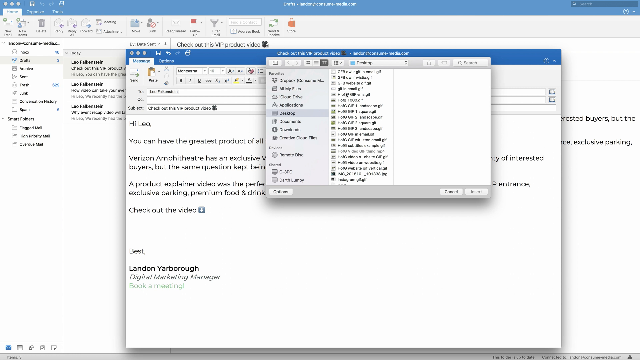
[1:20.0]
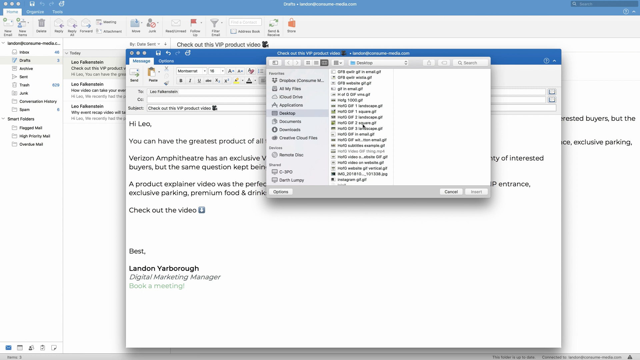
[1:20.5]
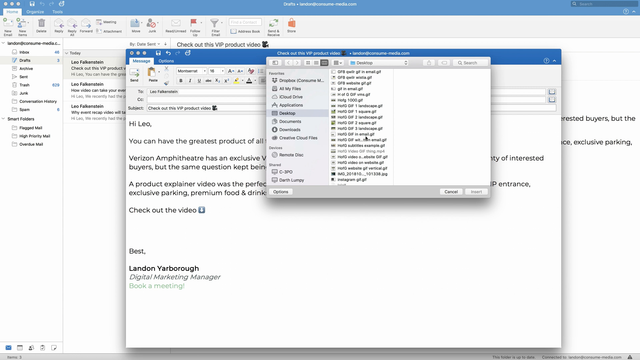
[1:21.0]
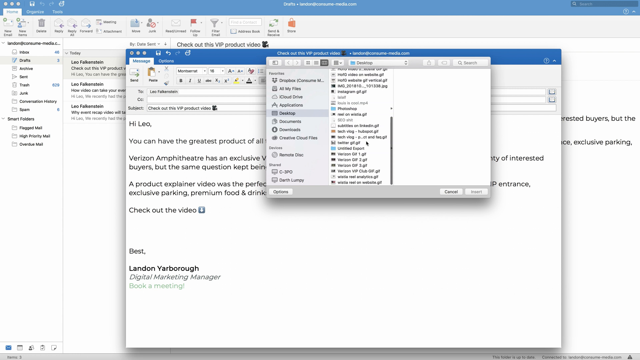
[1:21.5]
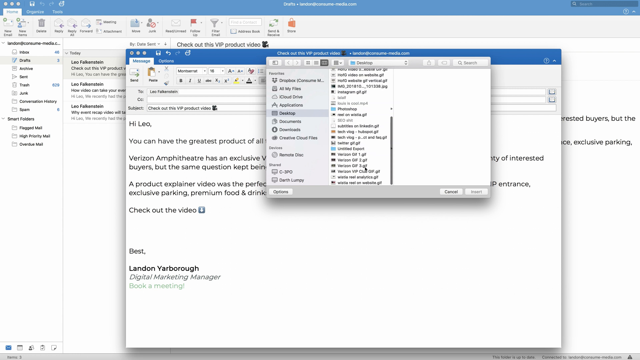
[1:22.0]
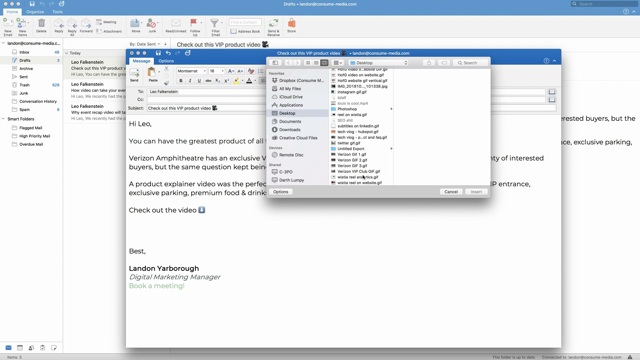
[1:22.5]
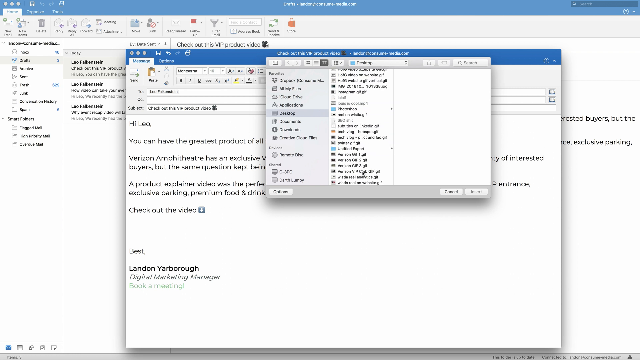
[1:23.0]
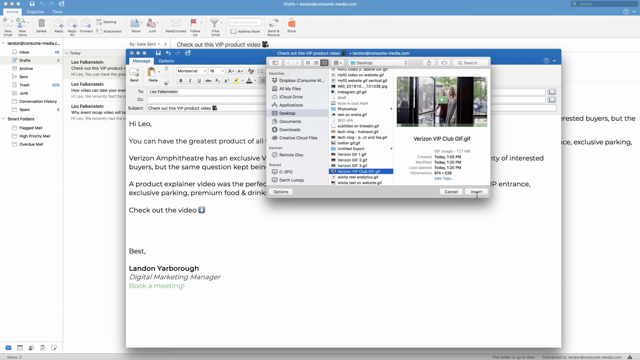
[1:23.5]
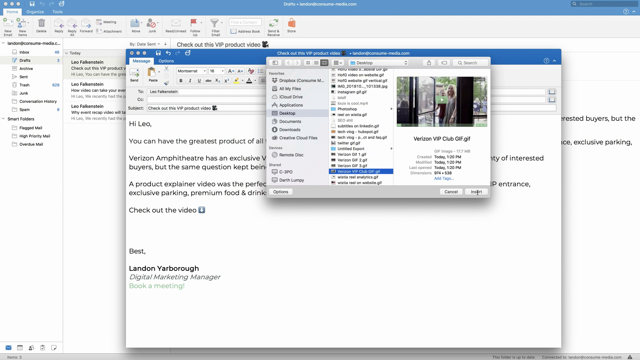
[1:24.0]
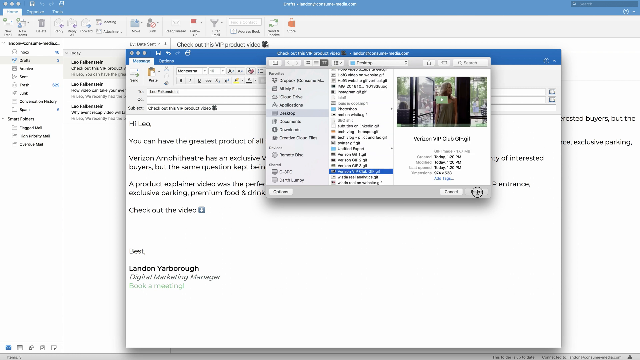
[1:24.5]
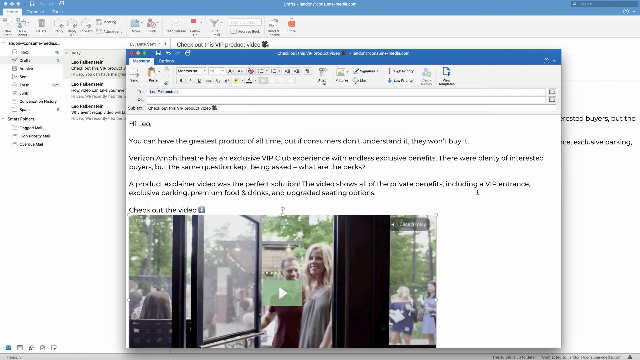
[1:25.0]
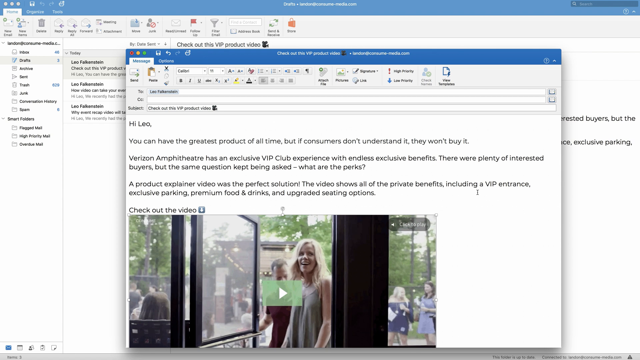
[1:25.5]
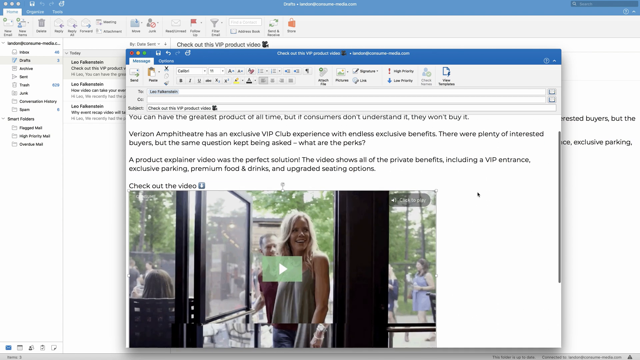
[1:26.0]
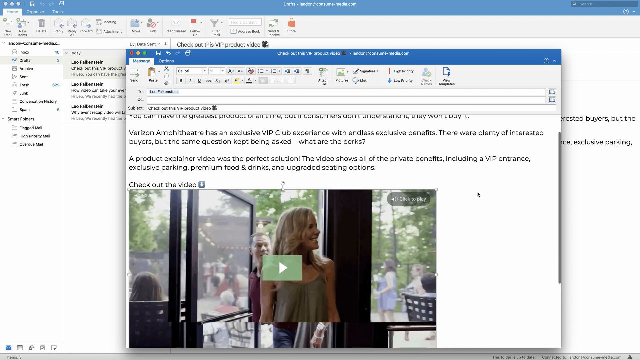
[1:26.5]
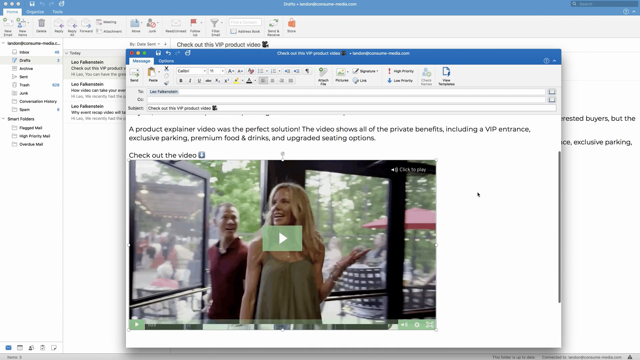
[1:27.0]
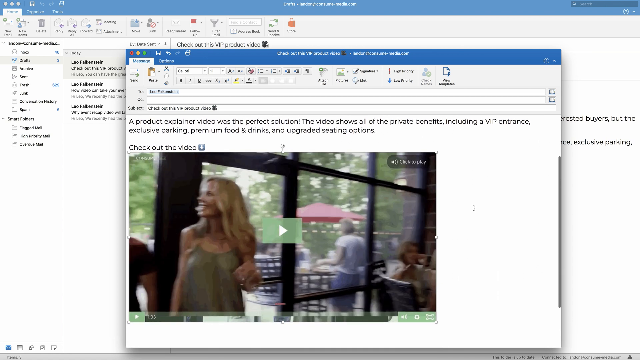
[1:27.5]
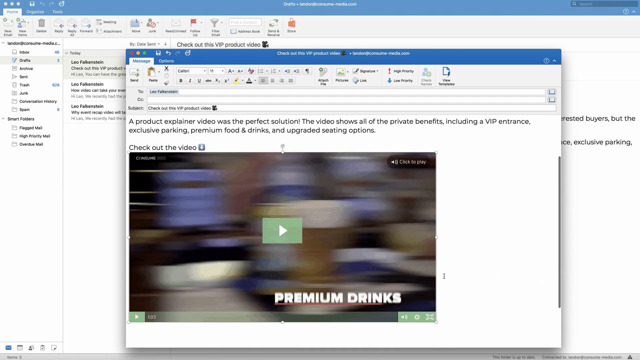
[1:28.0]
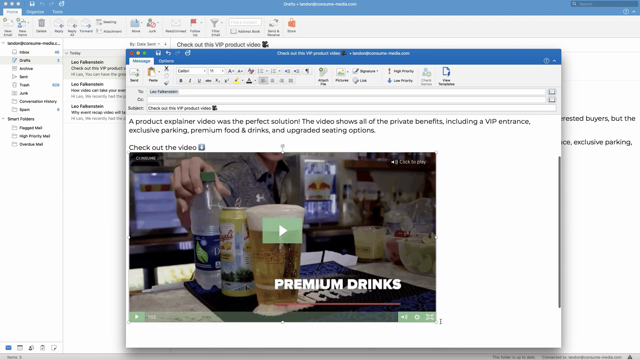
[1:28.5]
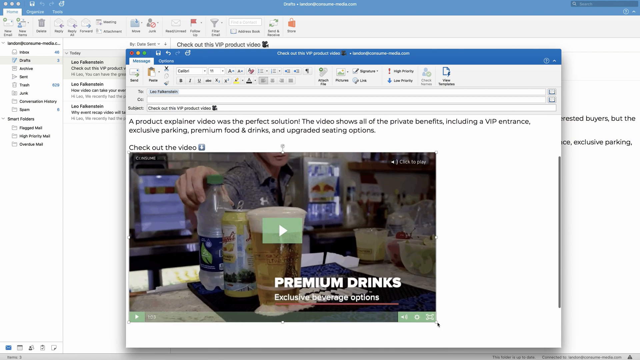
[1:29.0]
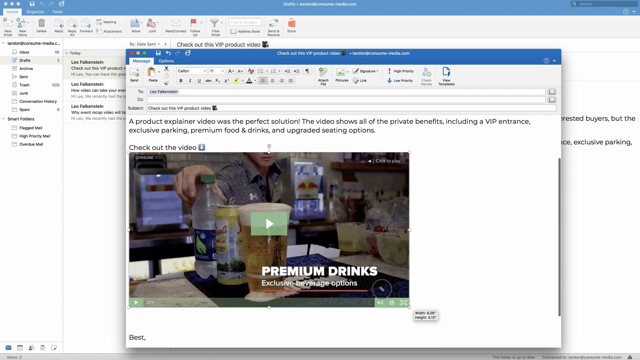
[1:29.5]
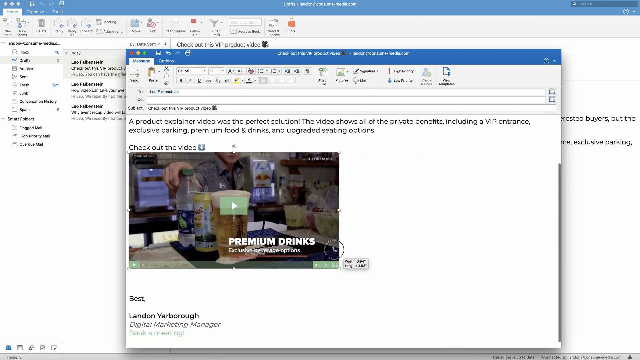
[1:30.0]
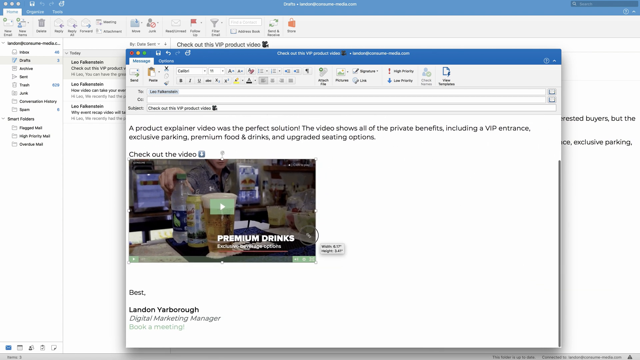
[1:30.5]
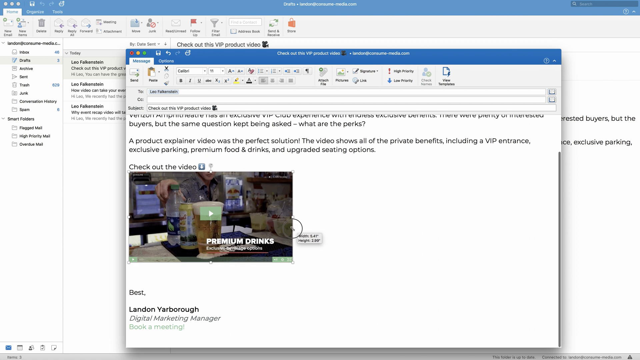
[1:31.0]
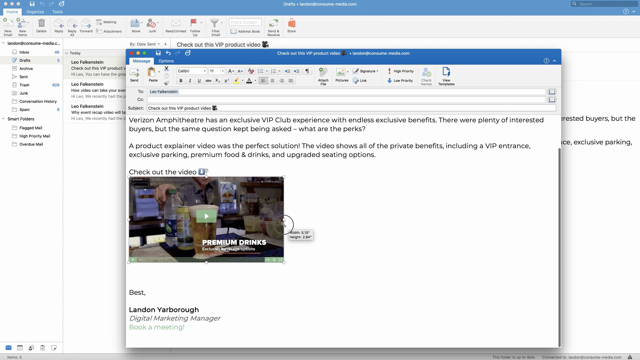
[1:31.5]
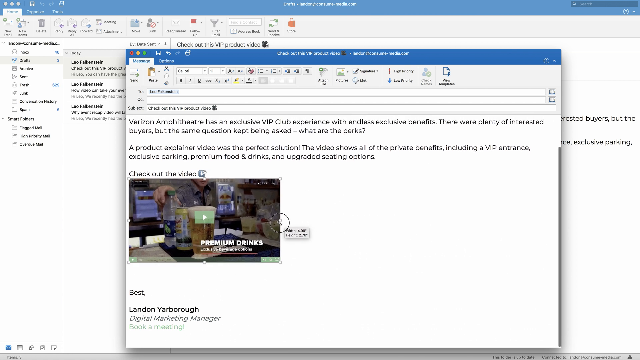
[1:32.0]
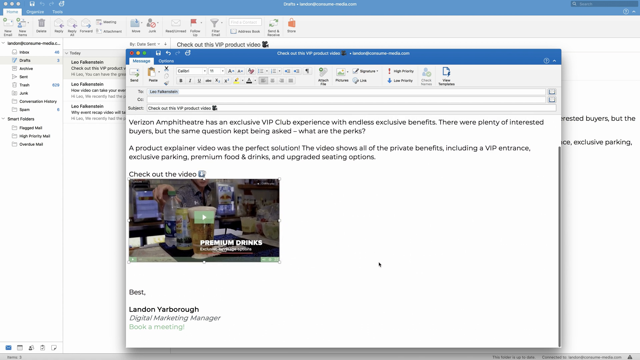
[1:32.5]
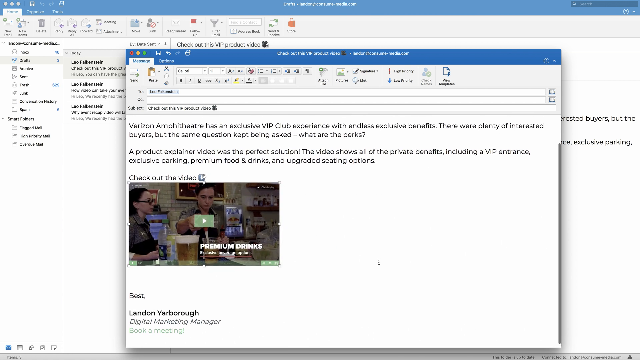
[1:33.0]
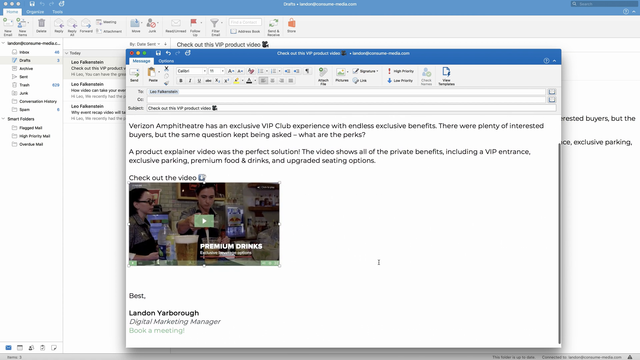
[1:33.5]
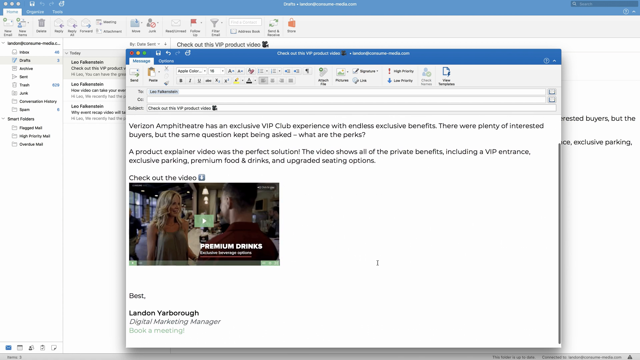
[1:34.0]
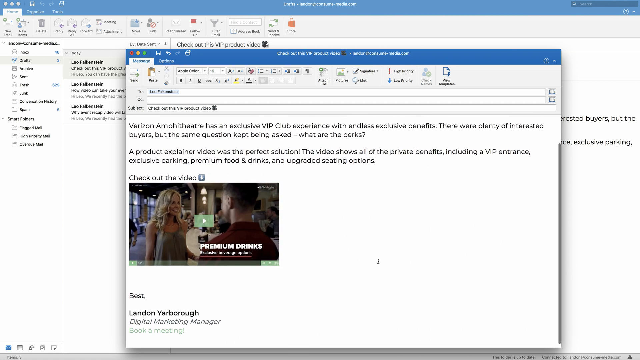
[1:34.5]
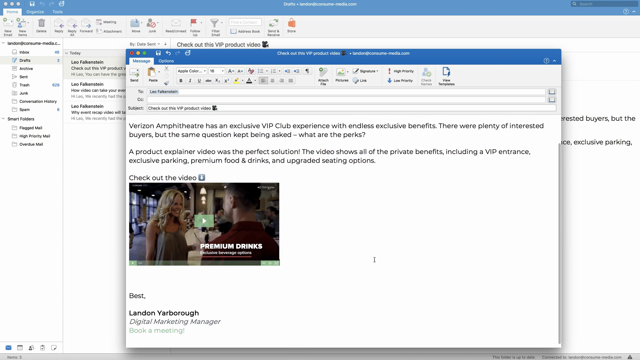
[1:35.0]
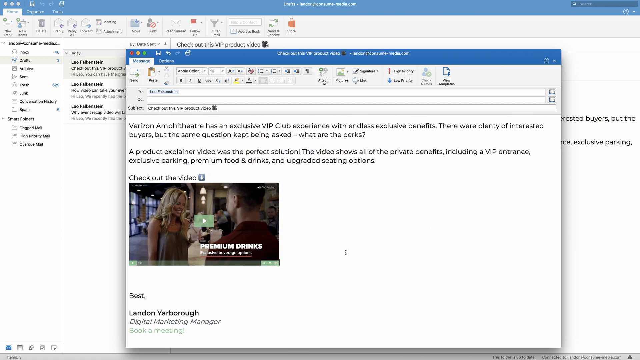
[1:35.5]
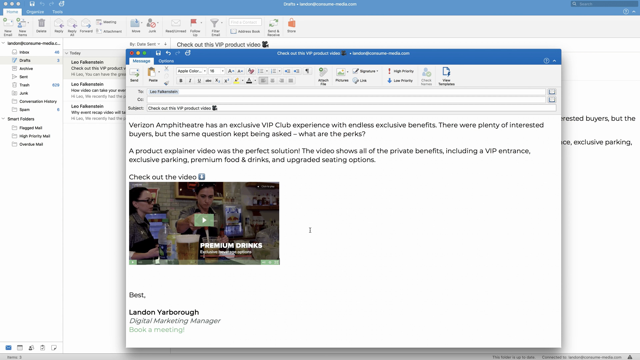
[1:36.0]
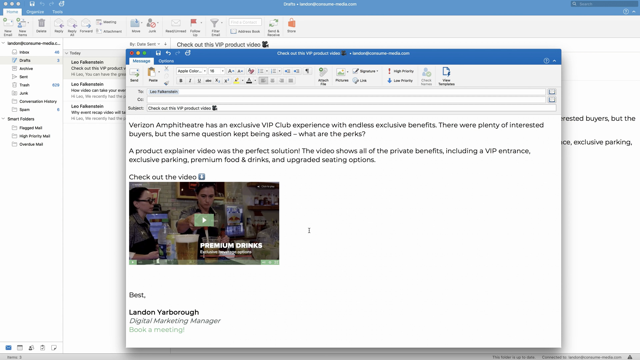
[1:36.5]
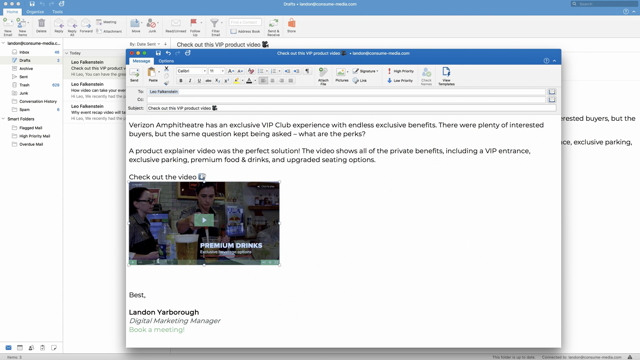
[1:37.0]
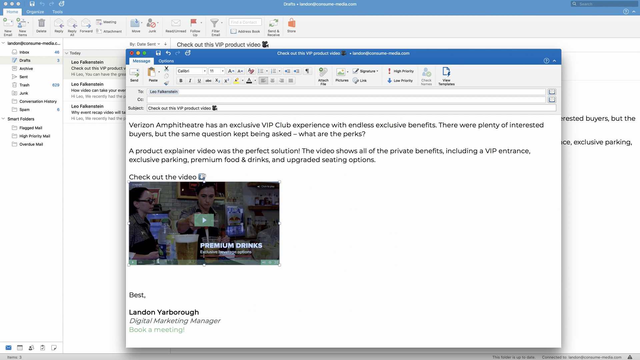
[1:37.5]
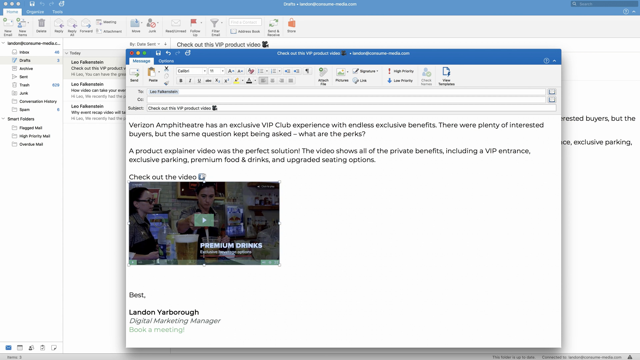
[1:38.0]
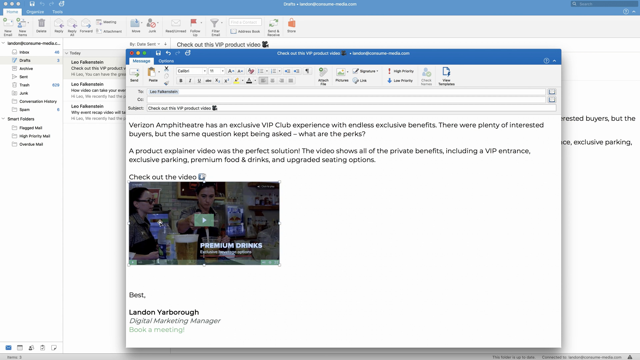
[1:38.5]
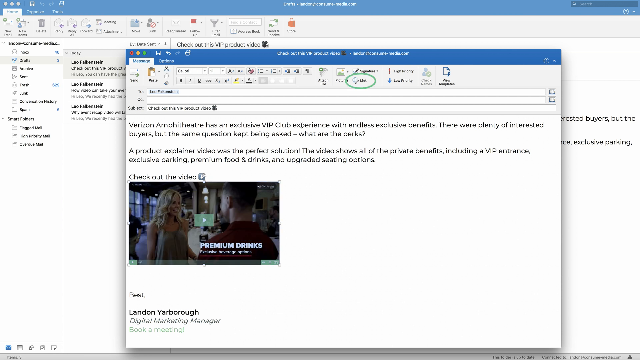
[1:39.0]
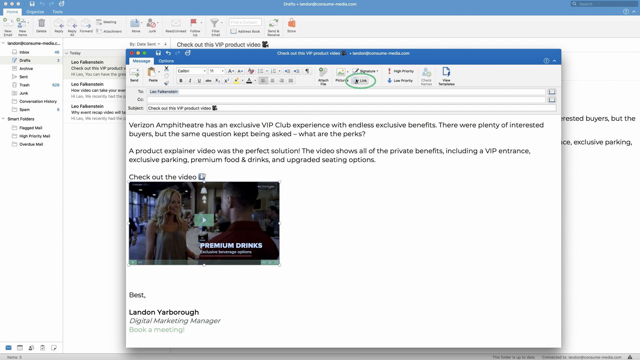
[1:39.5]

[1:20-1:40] Leo's email from Landon Yarborough is still on the screen. Having copied the link, Leo goes to his pictures, clicks on it, and goes to save as on the desktop; the cursor shows him saving it as "Verizon VIP club". Then the video starts to play, showing the Verizon Amphitheater club members' premium drinks: men and women in a club setting, with waiters and waitresses serving them. Some of them drink beer while others drink water. A blonde lady wearing a forest green tank top is talking to a man wearing a dark red t-shirt.